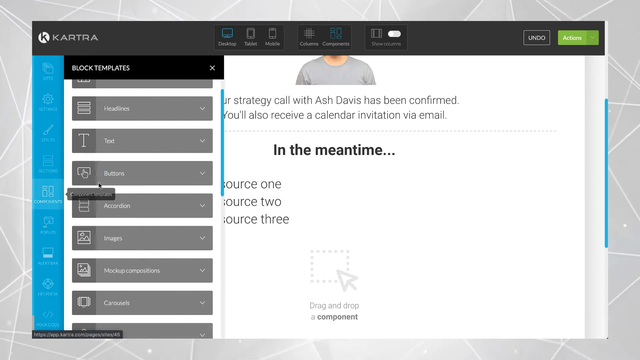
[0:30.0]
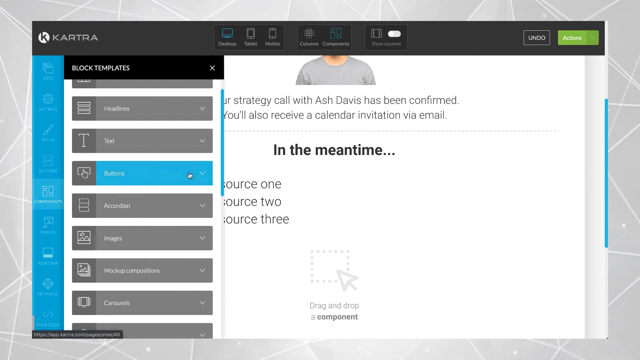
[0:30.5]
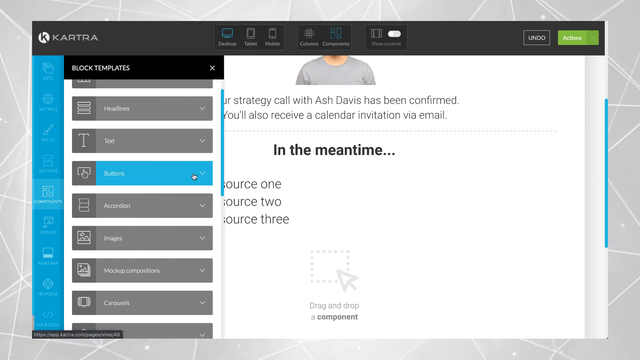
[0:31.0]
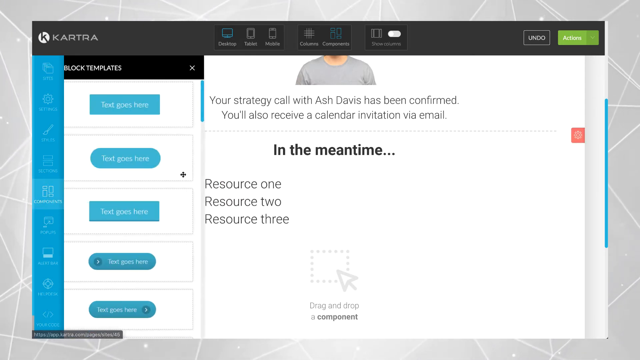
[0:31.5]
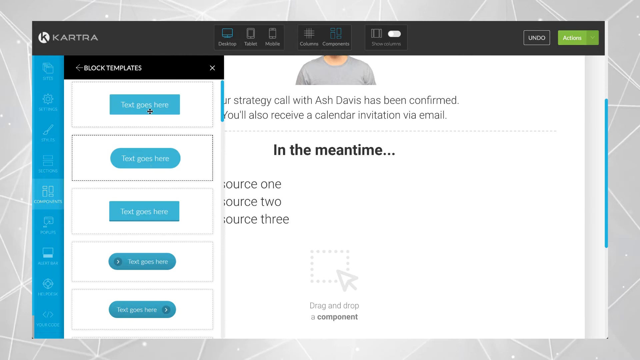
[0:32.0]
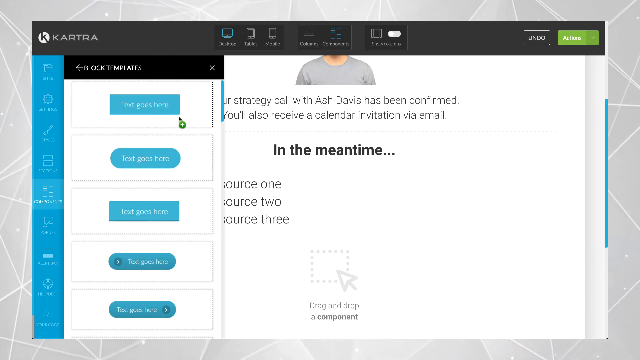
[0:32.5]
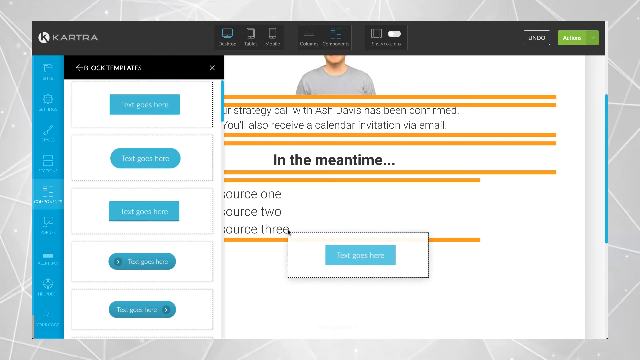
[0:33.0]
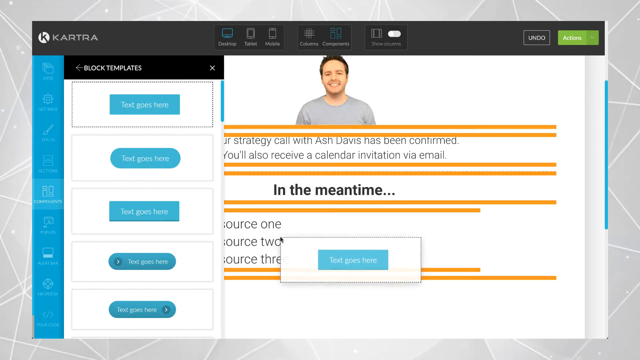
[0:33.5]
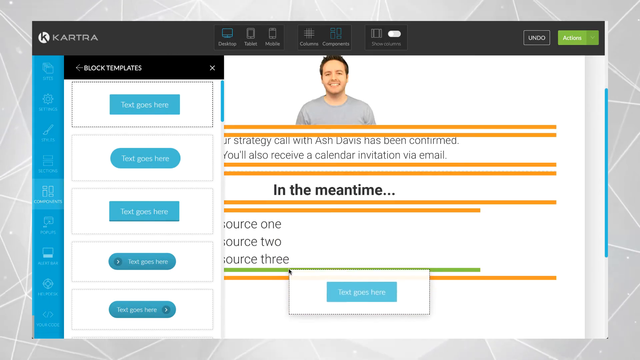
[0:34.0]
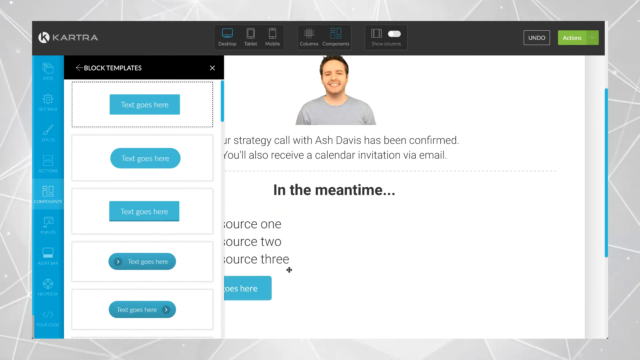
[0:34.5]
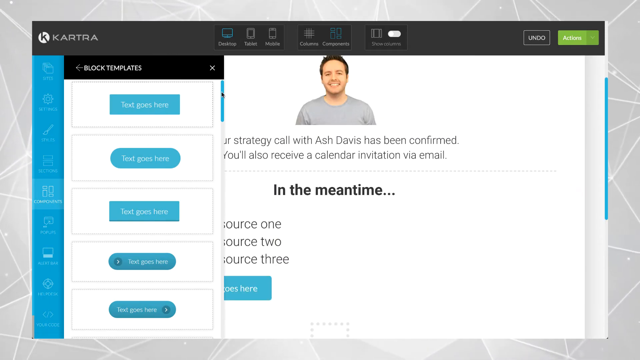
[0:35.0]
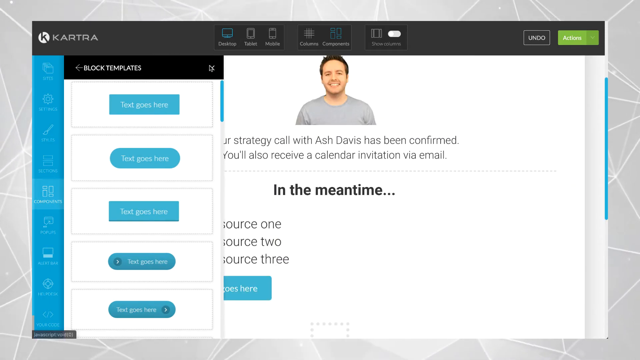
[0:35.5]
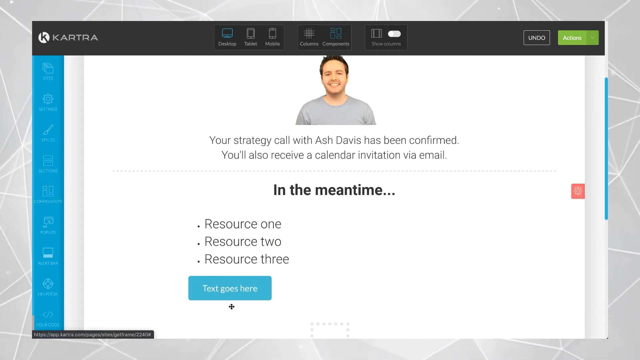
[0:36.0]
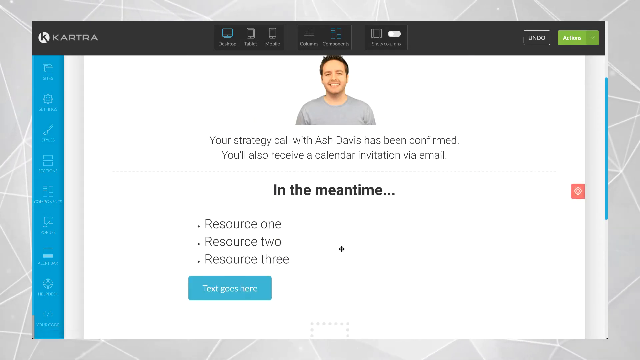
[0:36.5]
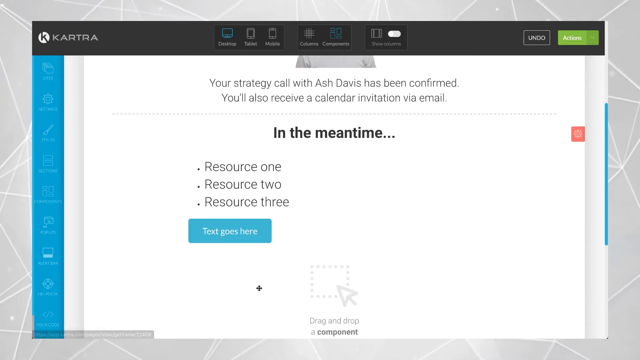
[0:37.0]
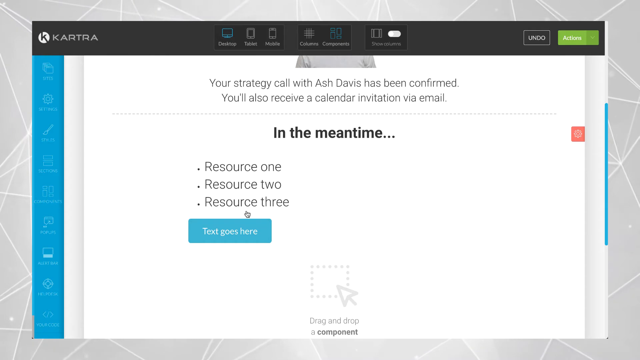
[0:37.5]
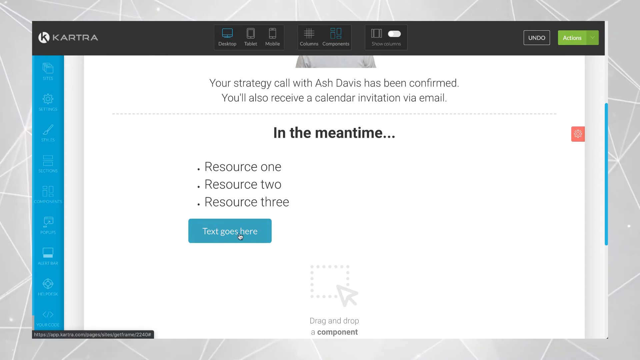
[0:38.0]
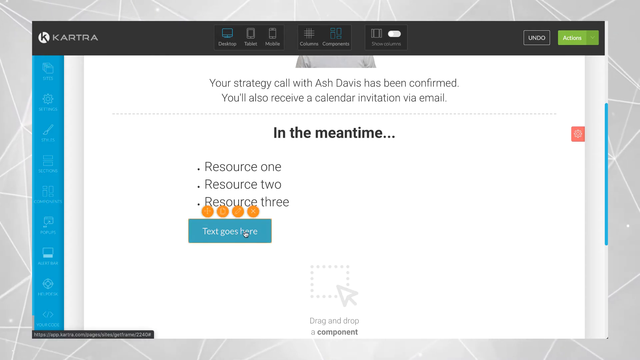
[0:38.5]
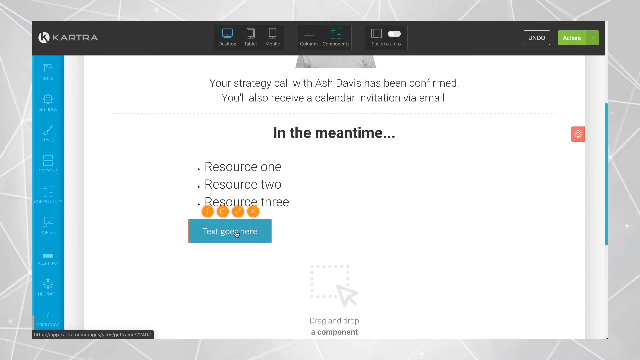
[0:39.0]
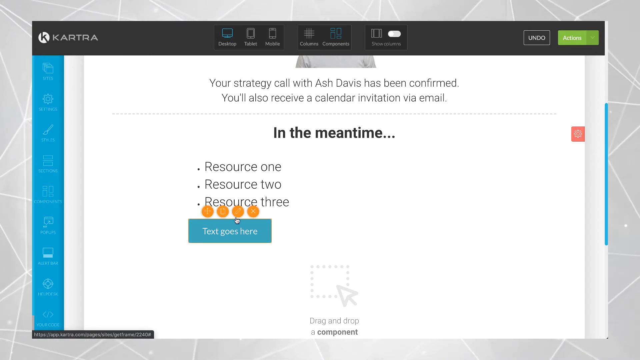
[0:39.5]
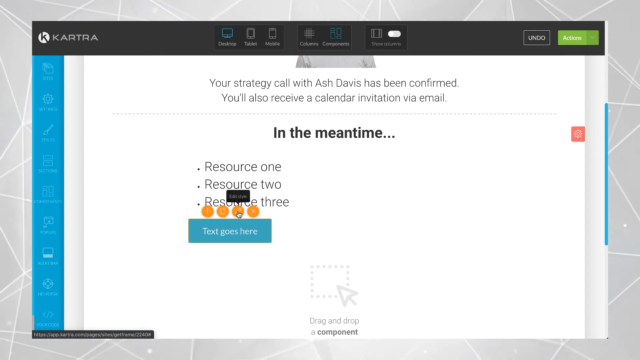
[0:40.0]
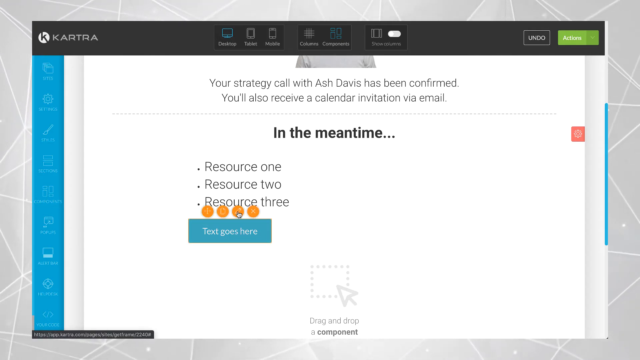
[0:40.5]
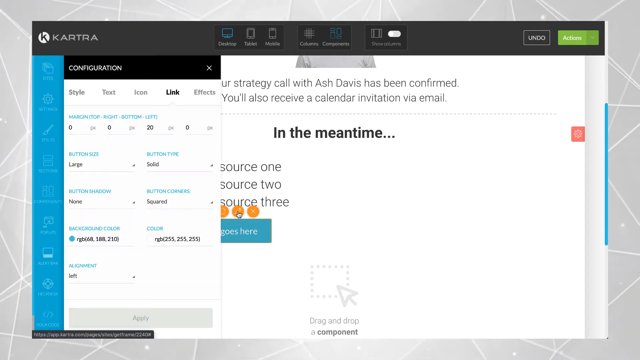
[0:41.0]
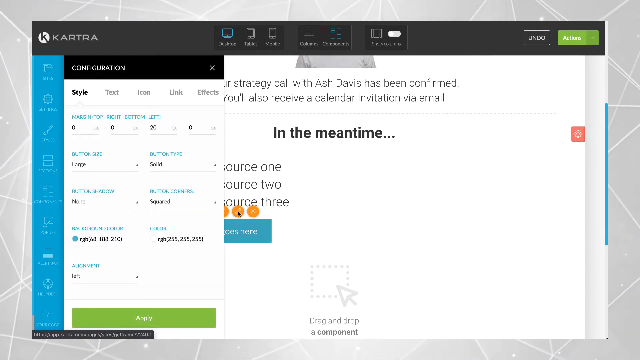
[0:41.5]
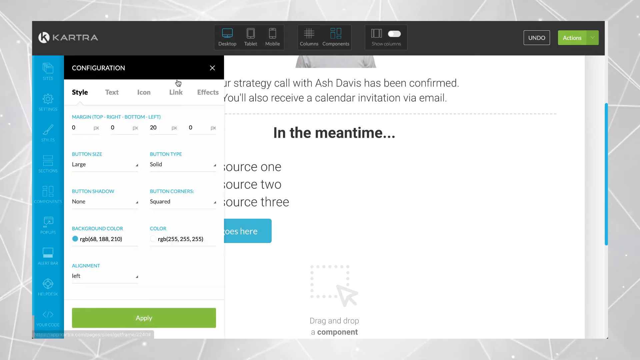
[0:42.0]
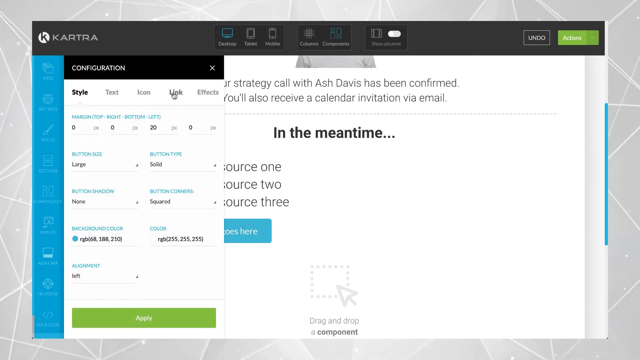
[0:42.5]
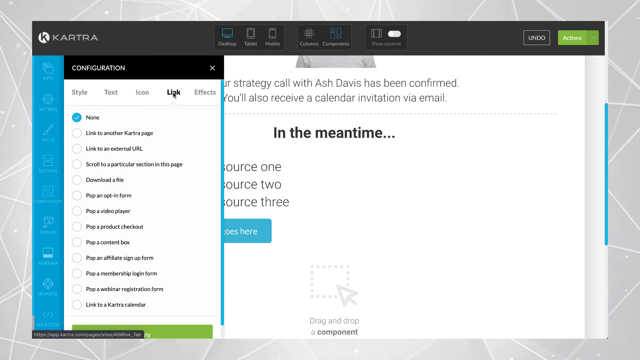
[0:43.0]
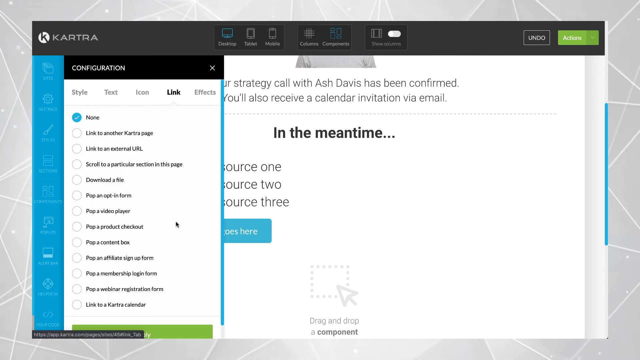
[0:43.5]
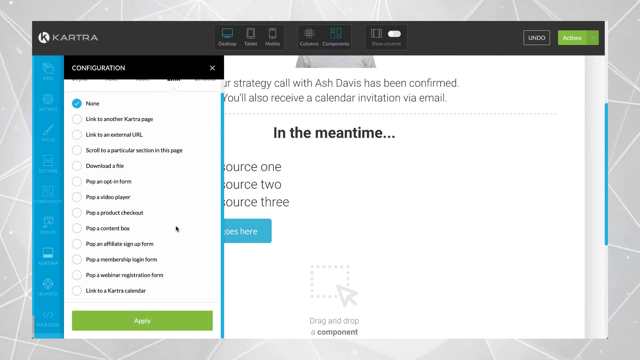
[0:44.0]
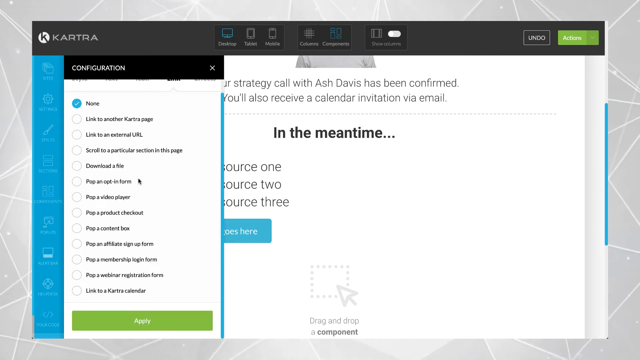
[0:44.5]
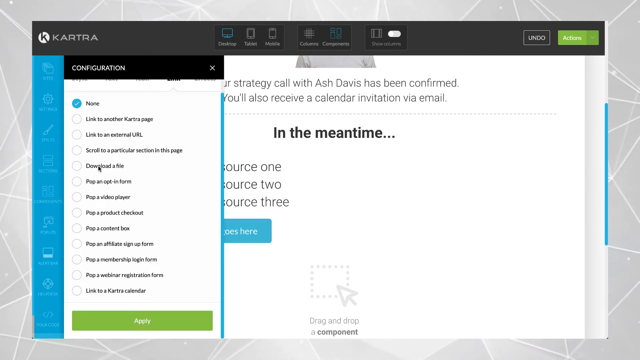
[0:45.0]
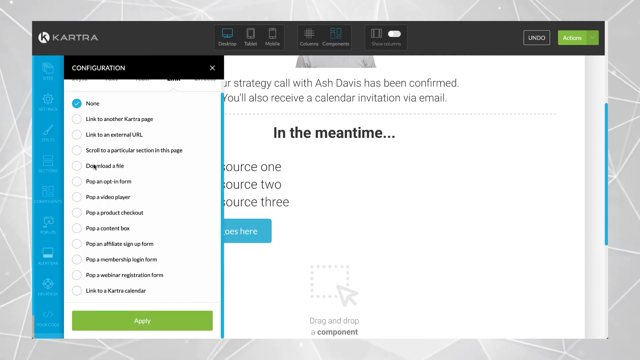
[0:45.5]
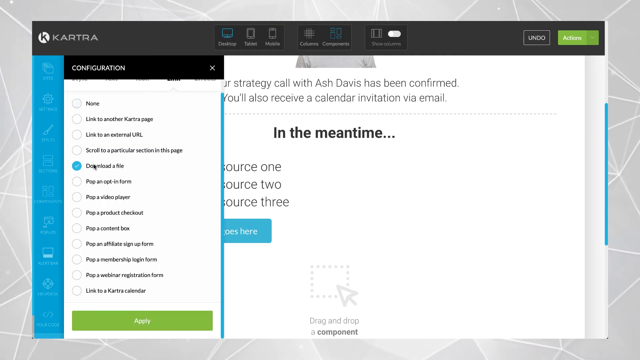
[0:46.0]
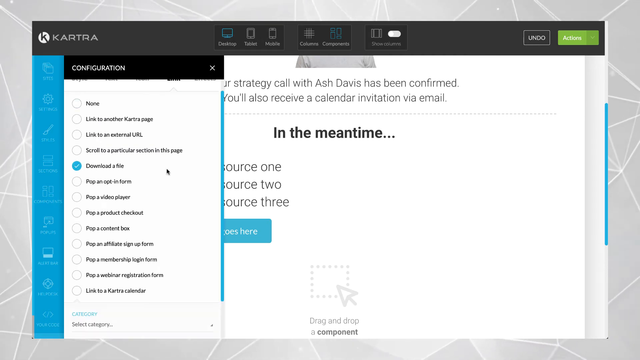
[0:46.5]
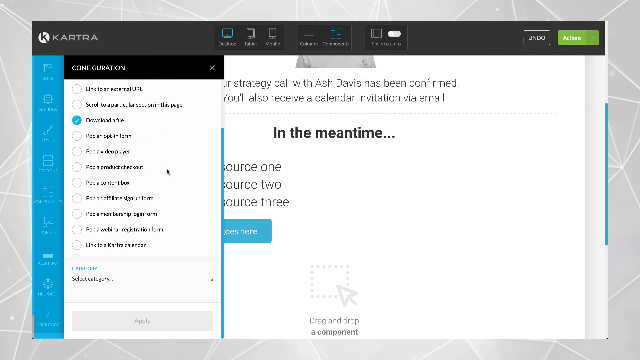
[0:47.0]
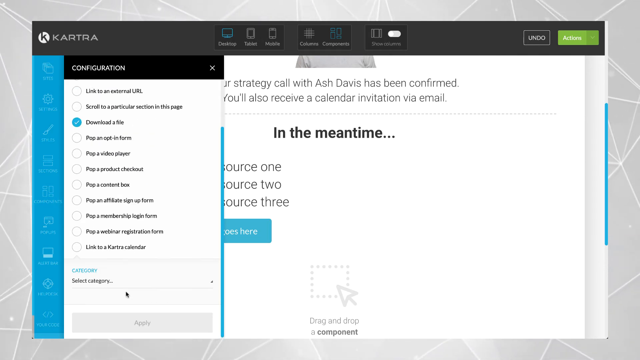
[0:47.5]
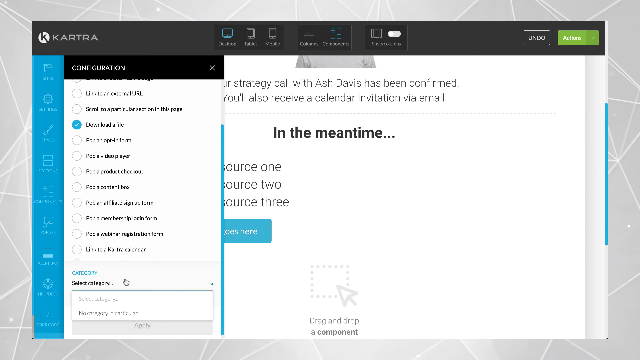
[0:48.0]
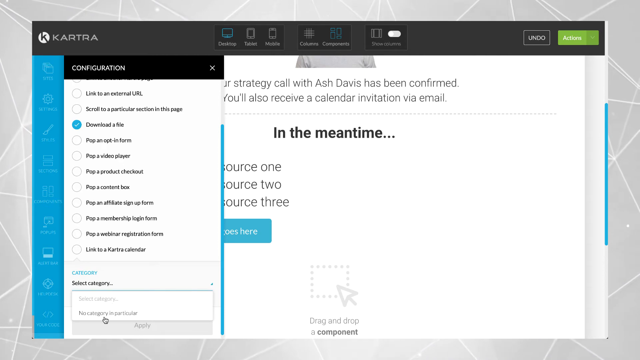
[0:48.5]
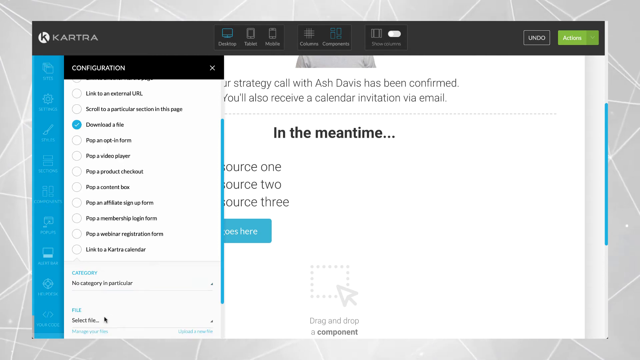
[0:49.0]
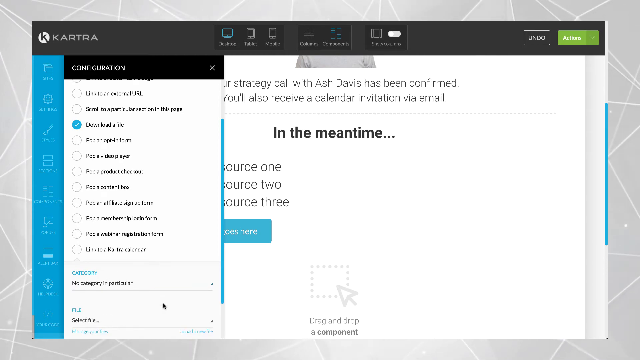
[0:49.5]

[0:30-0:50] The computer screen shows a website for a company whose name is spelled KARTRA. The main screen is white, with text saying a call with Ash Davis has been confirmed, and "in the meantime" in dark text. The main thing showing is "block templates" on the left side, and the mouse highlights buttons in blue. The view switches to another screen that says "text goes here," with options of different sizes. "Text goes here" is highlighted and pulled down into the page as if it is being built, placed at the bottom below "resource three." It is then highlighted, "link" is selected, and "download a file" is clicked. A box pops up asking about categorizing it, and nothing in particular is entered.